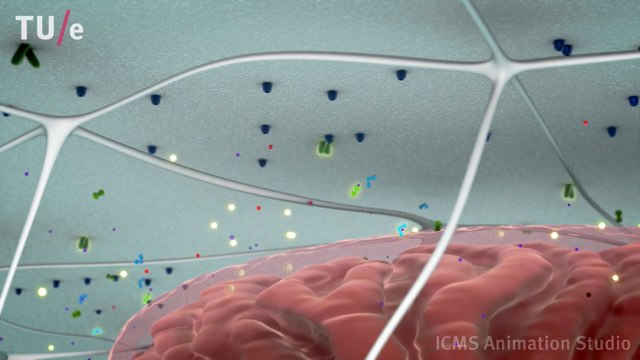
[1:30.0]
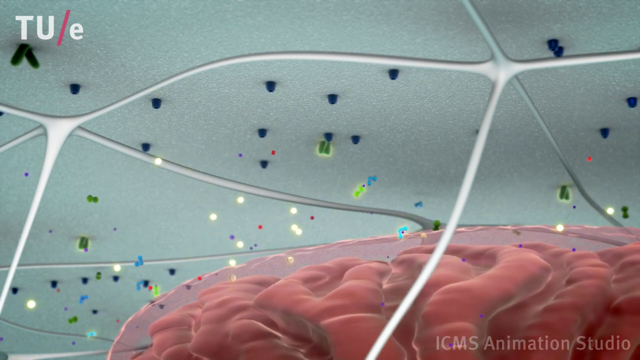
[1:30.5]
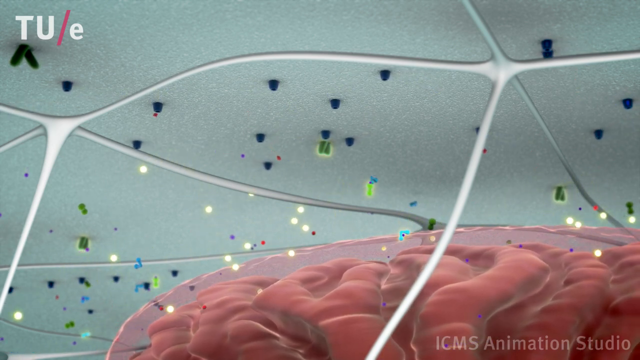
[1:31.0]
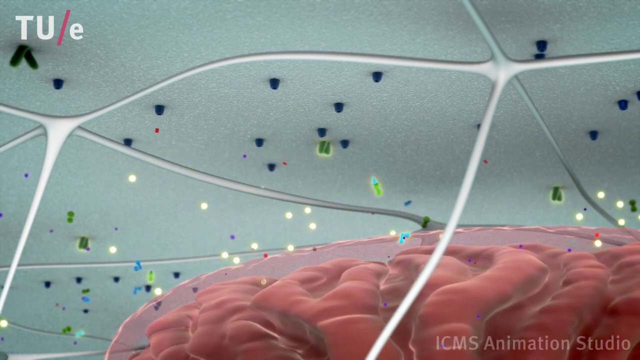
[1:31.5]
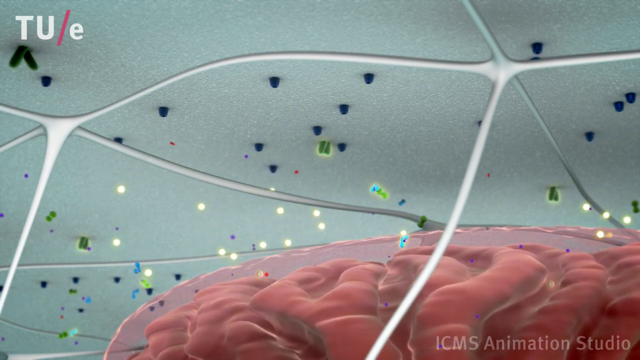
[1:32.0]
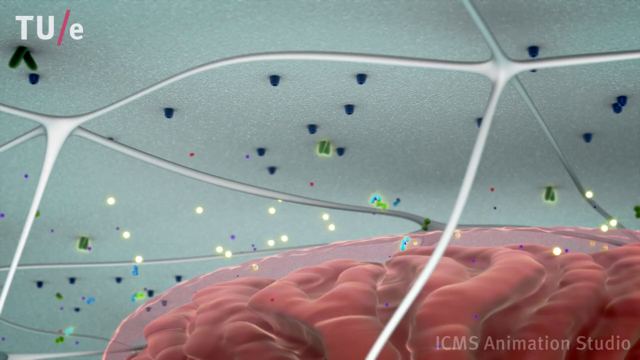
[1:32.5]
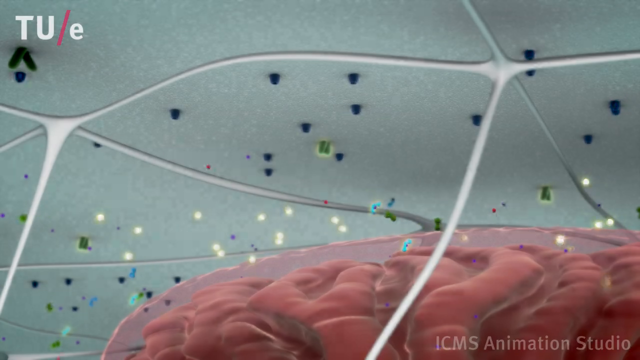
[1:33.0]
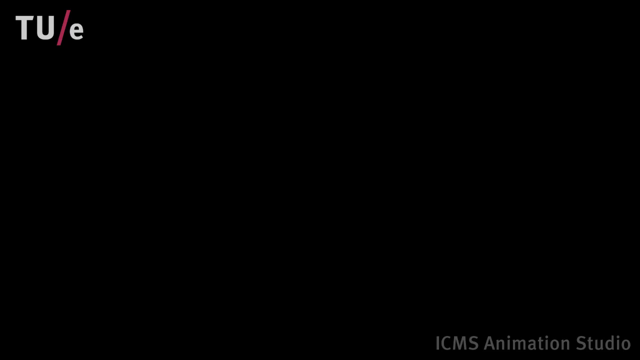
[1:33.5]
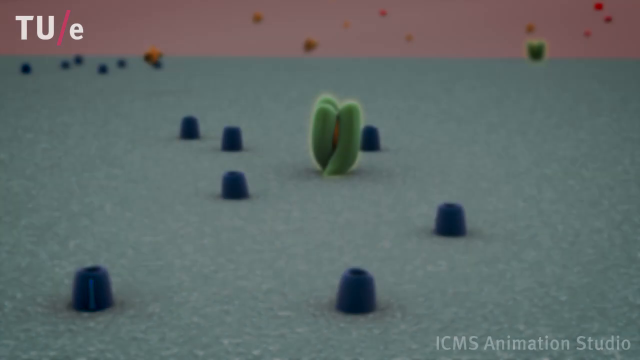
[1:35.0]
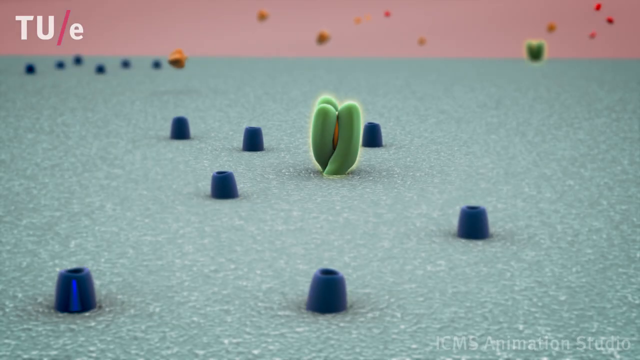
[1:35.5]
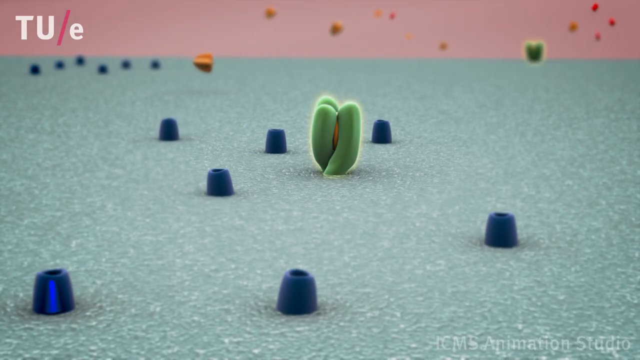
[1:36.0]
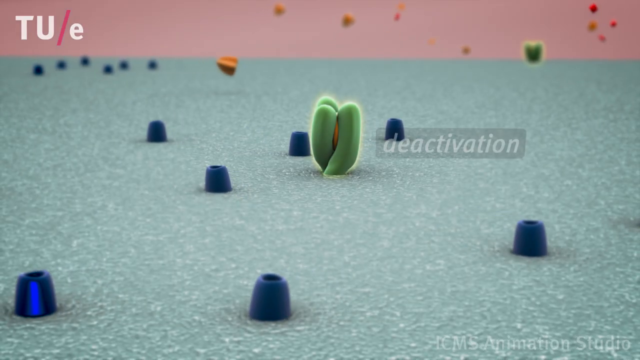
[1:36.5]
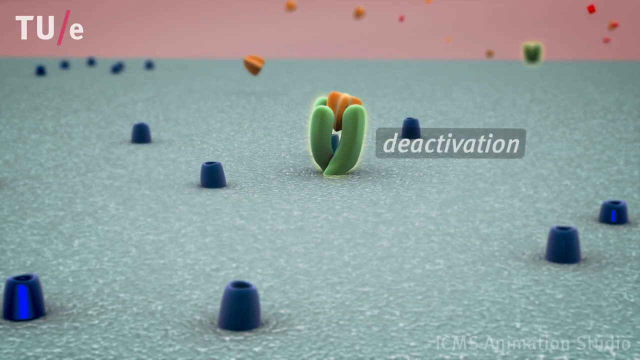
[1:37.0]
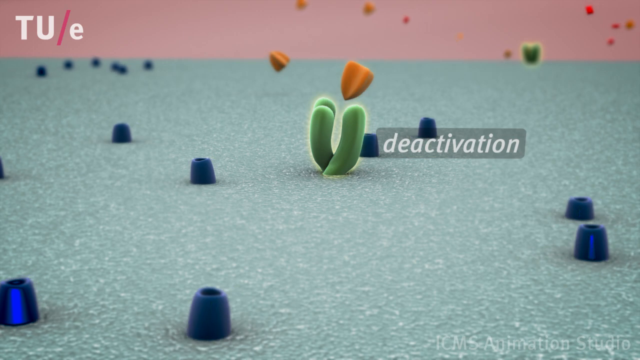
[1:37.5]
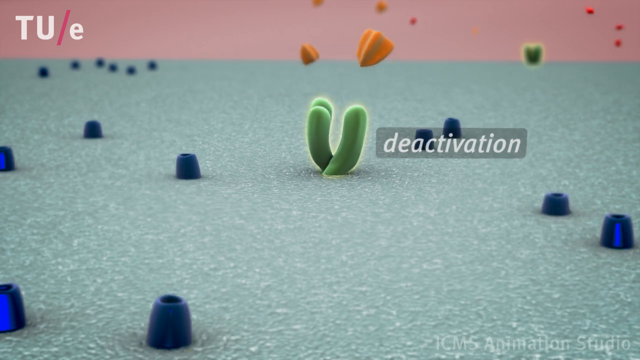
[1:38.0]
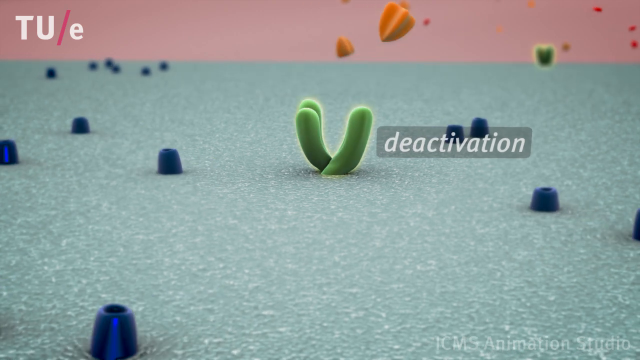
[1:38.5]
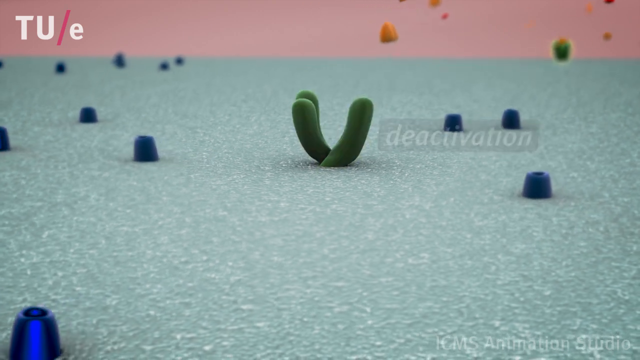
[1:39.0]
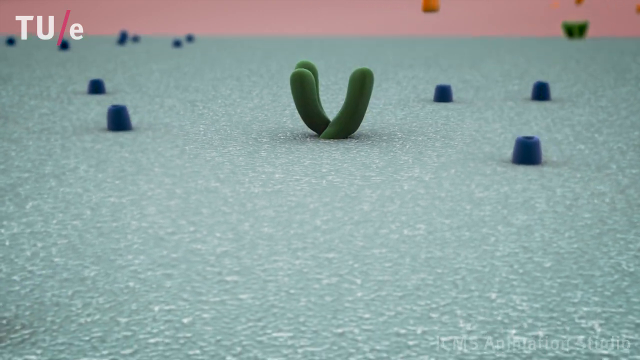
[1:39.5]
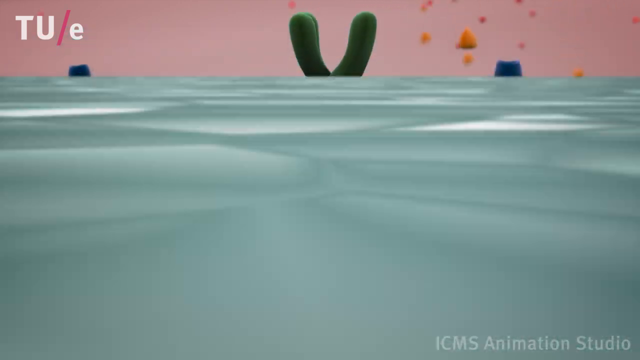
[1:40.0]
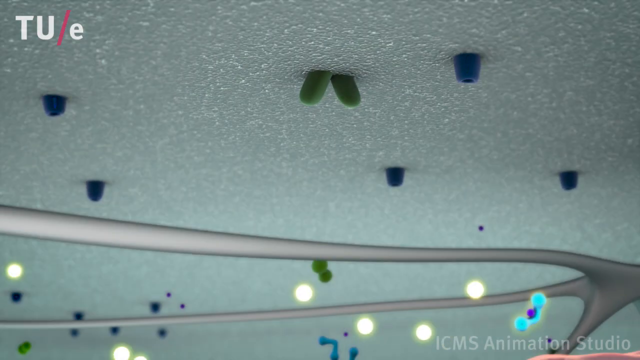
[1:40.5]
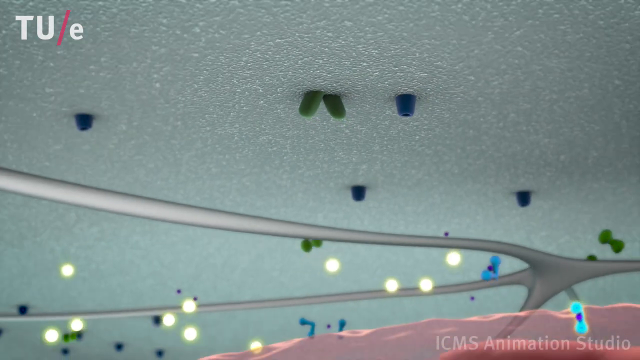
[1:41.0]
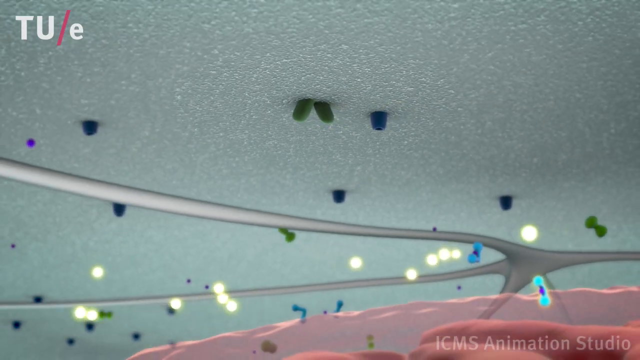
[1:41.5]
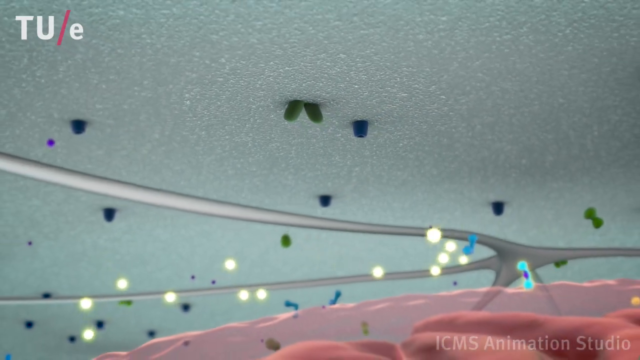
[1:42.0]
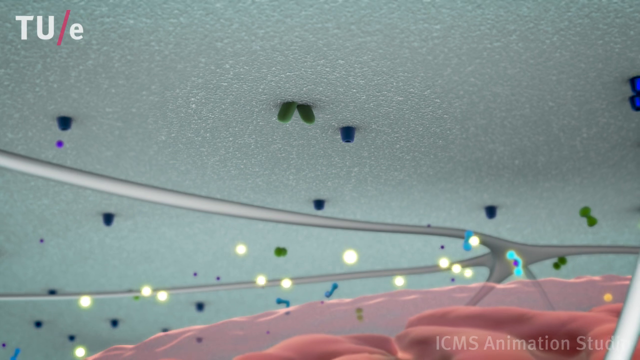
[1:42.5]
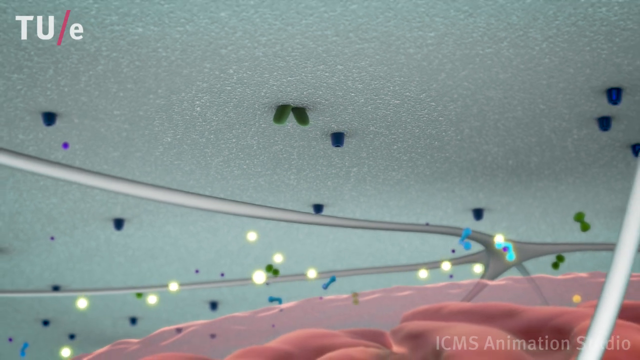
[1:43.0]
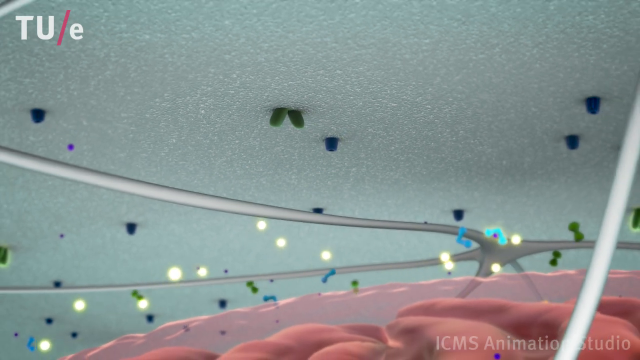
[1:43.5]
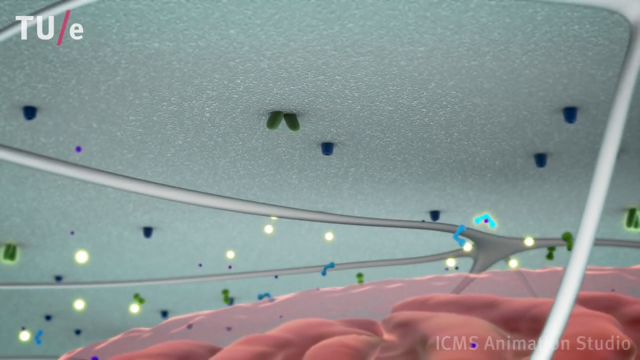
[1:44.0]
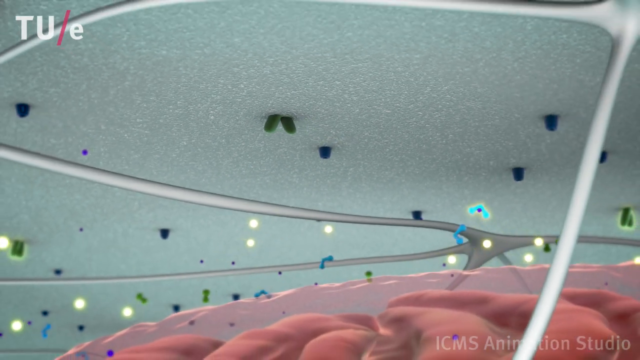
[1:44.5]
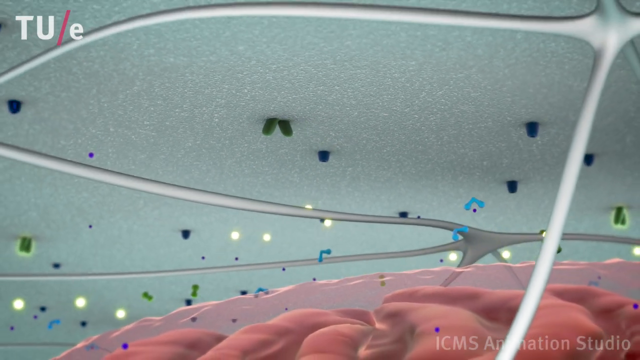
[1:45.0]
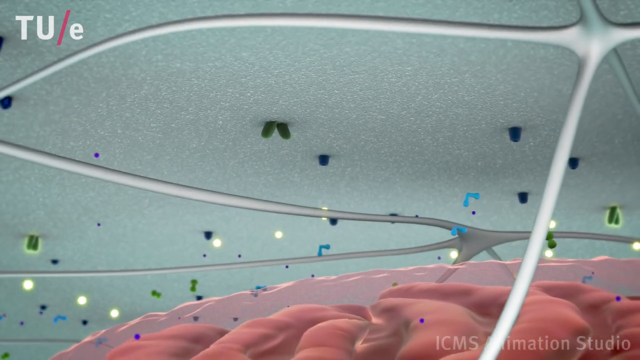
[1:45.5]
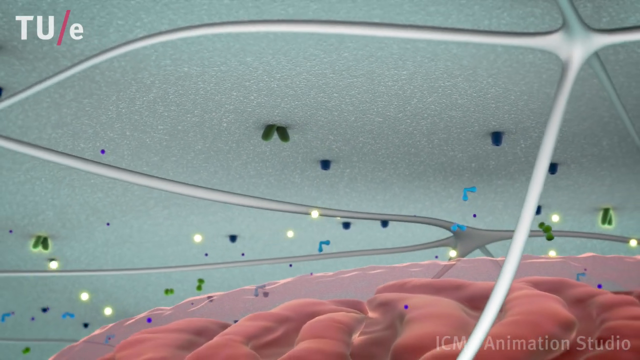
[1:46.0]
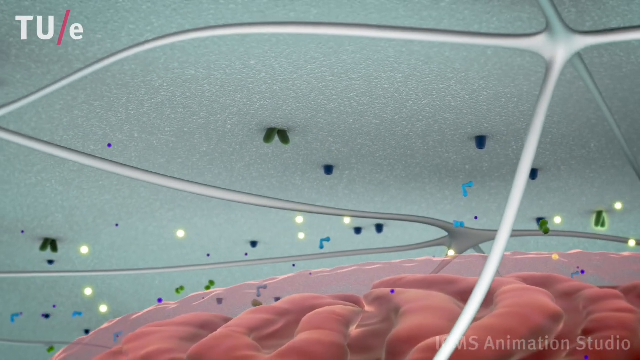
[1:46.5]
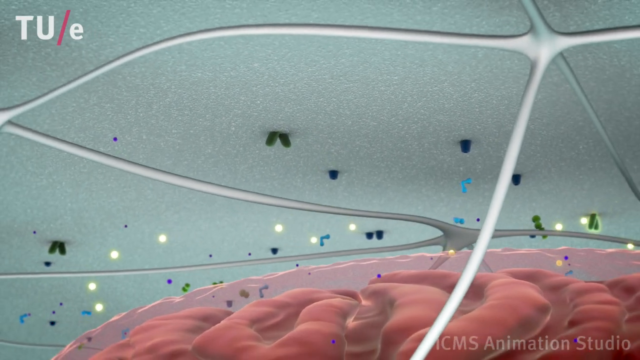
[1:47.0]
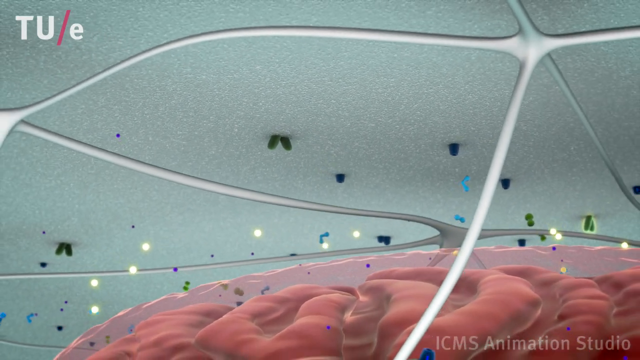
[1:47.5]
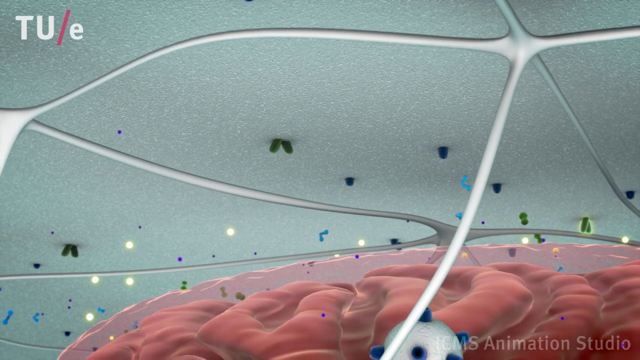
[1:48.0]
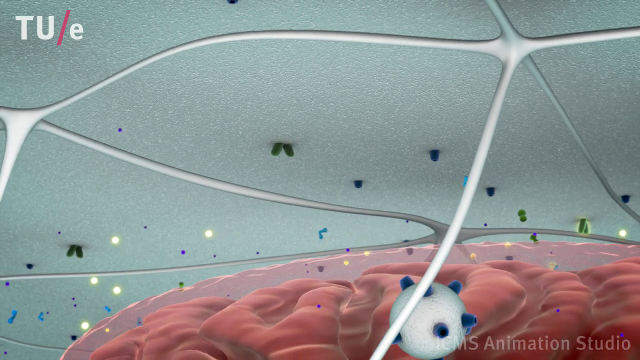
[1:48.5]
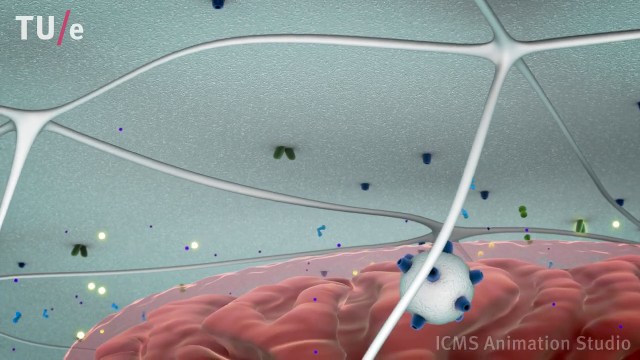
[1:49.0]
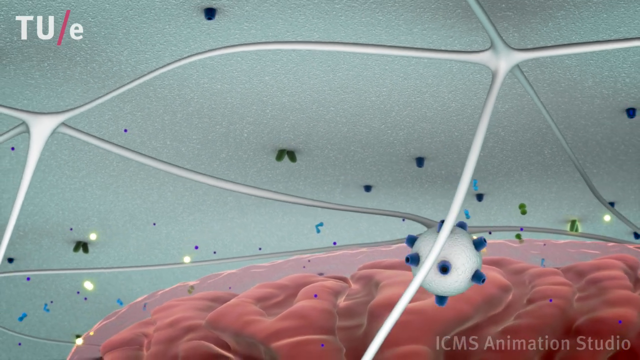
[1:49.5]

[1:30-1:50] As the liposomes move, a deactivation takes place; it changes and moves upside down. ICMS Animation Studio is credited, along with the Technology University. Each of the pieces is coloured differently. The liposomes are white balls with blue, spiky-looking things on them. Orange pieces, part of the deactivation process, float around, as do green things, and different muscle groups appear in the animation.